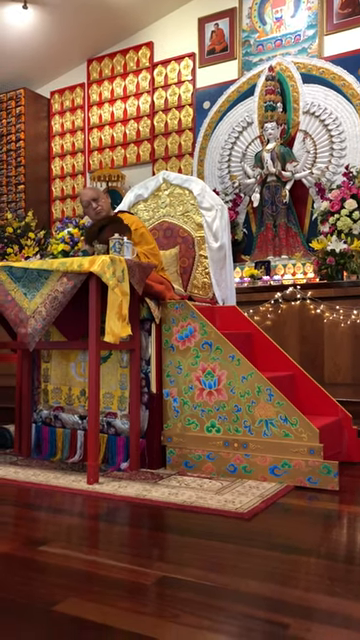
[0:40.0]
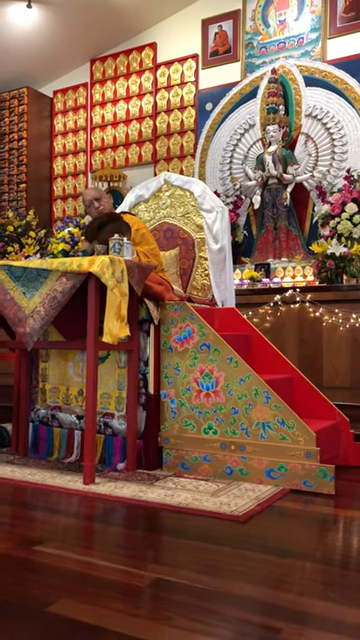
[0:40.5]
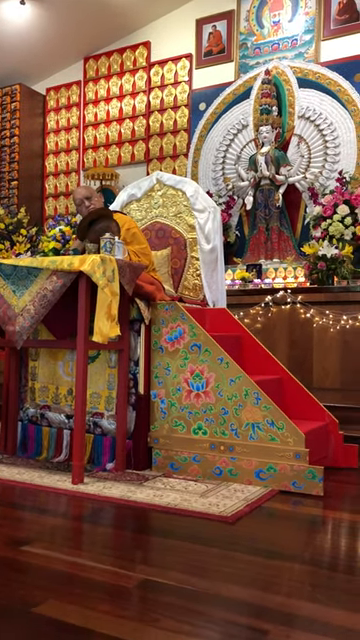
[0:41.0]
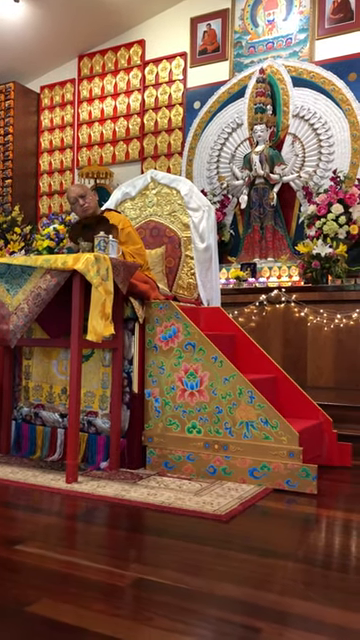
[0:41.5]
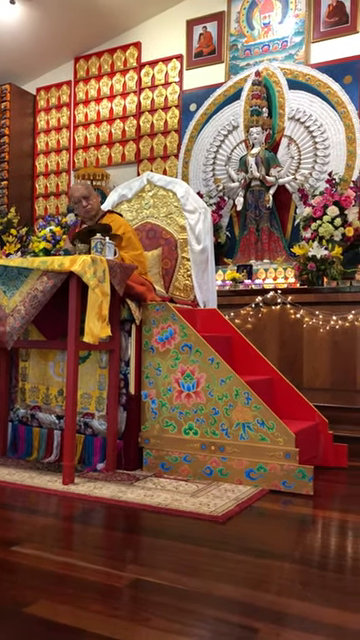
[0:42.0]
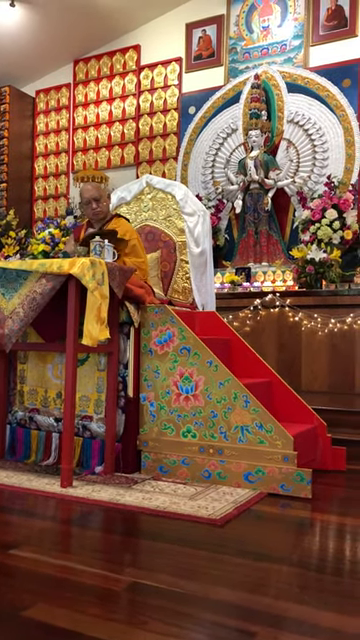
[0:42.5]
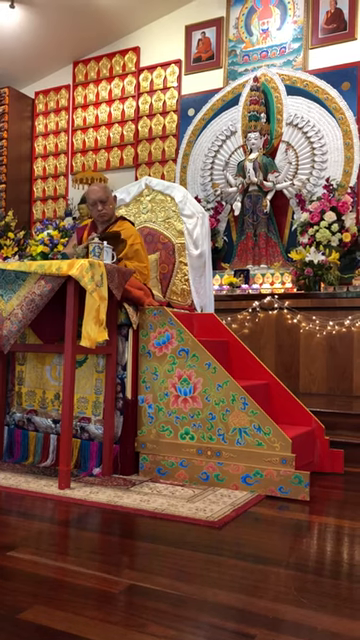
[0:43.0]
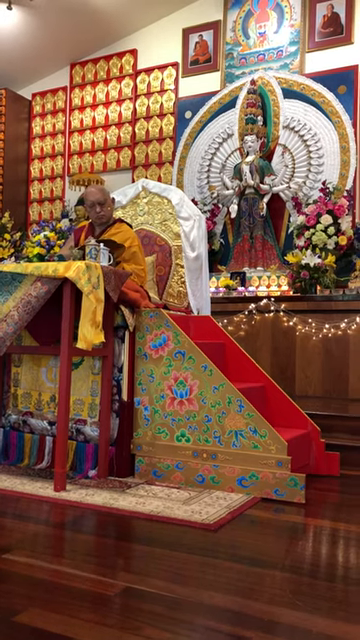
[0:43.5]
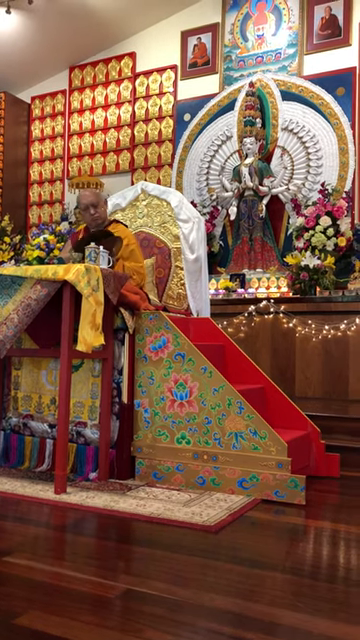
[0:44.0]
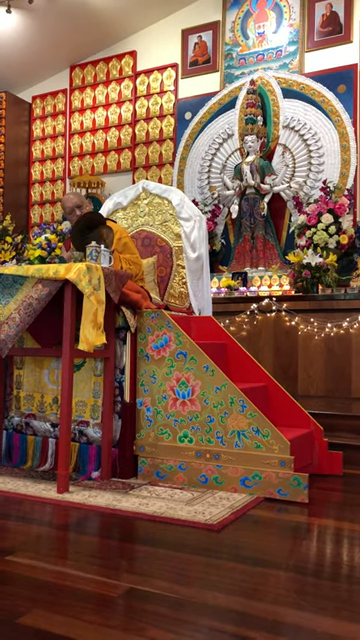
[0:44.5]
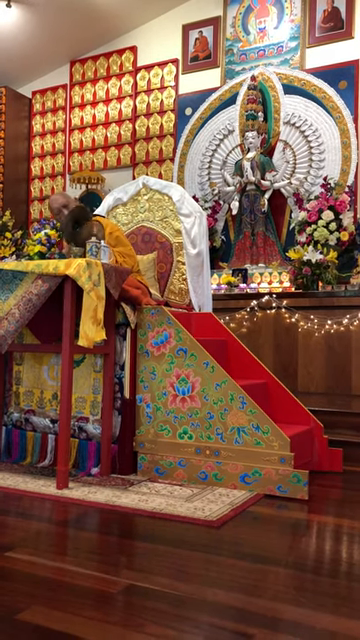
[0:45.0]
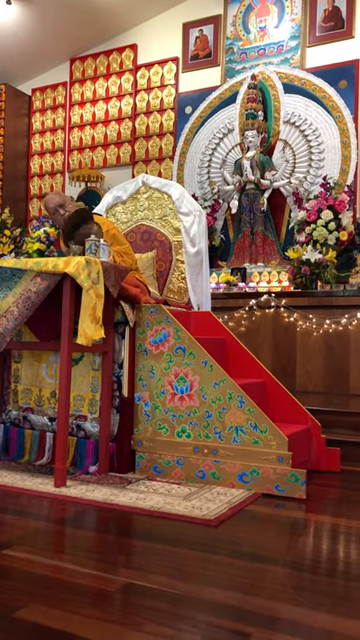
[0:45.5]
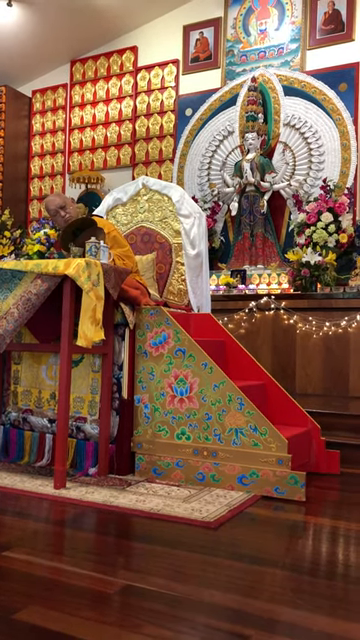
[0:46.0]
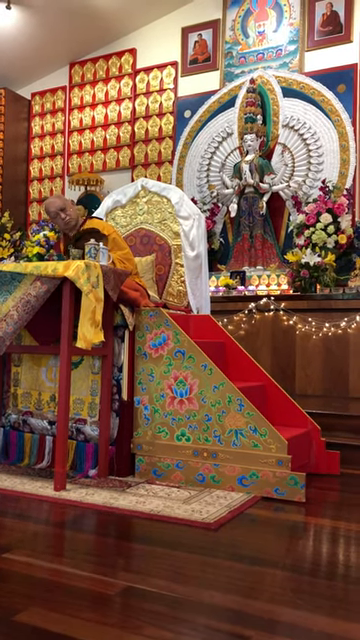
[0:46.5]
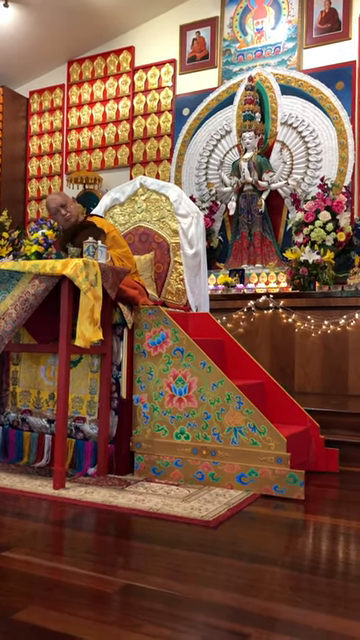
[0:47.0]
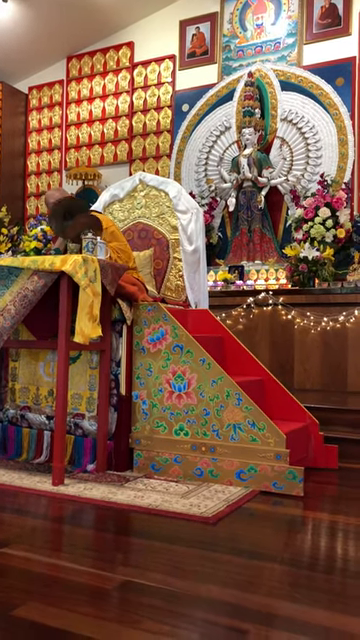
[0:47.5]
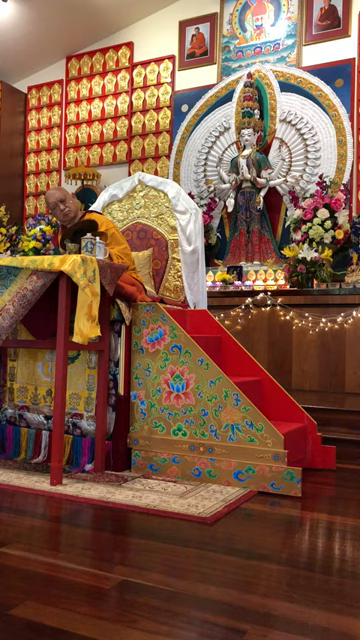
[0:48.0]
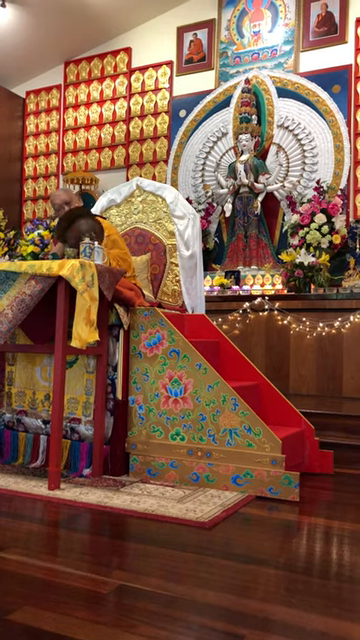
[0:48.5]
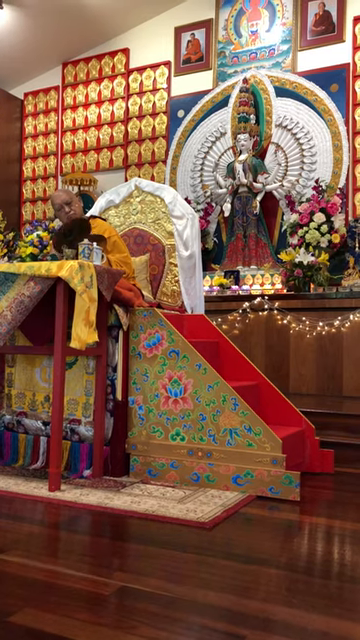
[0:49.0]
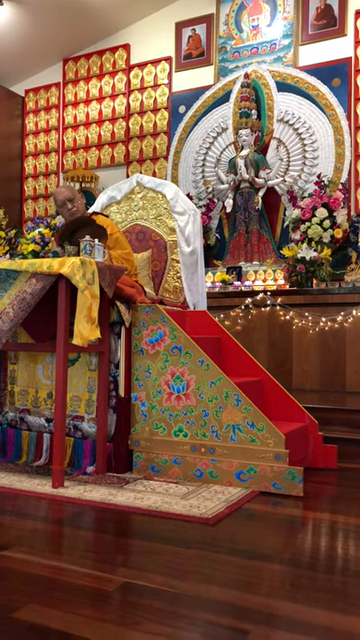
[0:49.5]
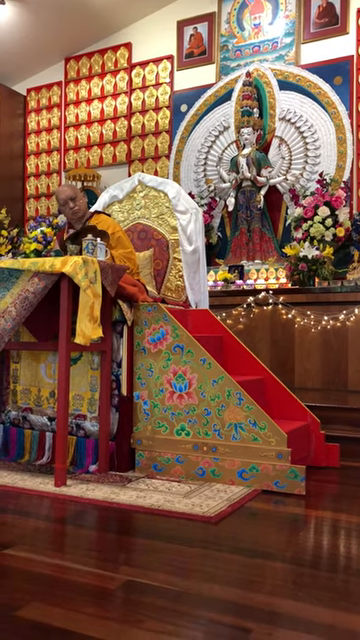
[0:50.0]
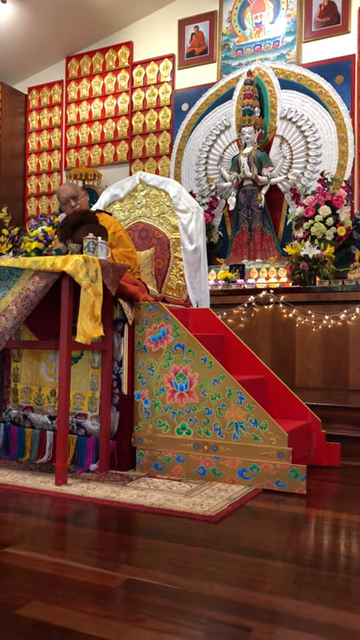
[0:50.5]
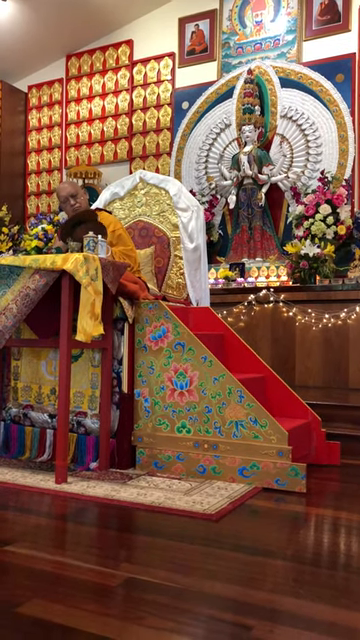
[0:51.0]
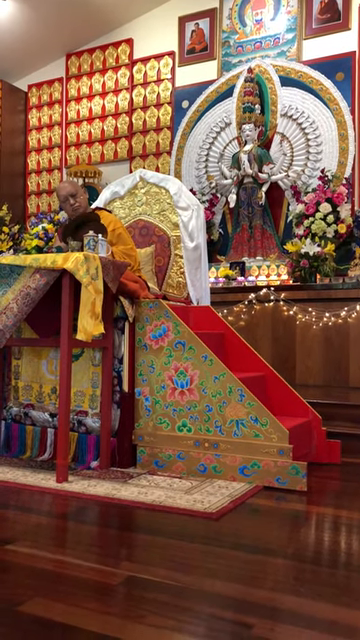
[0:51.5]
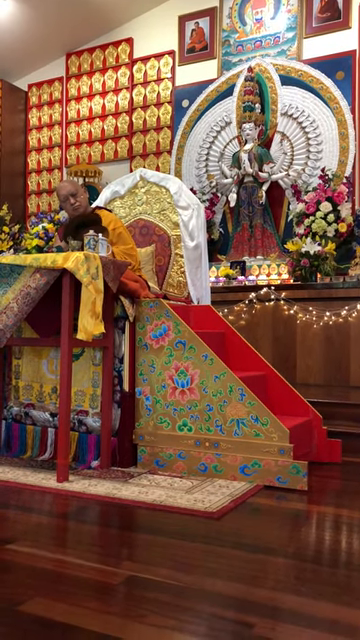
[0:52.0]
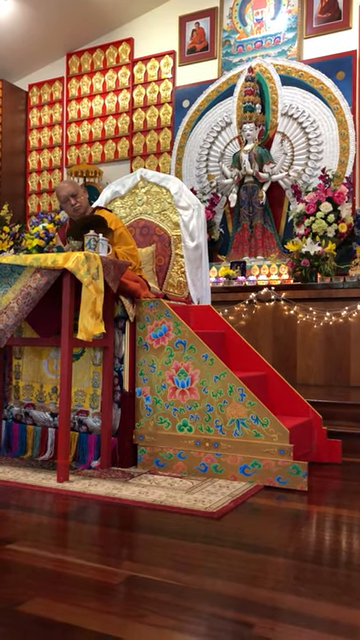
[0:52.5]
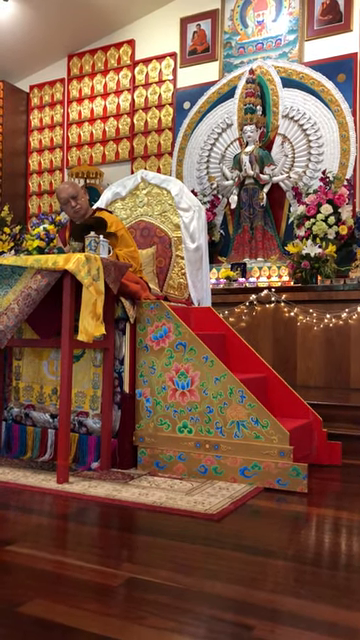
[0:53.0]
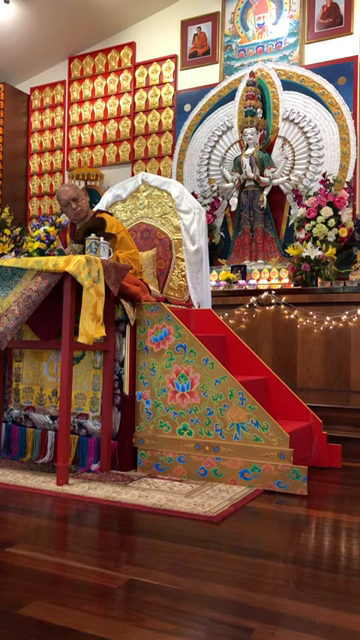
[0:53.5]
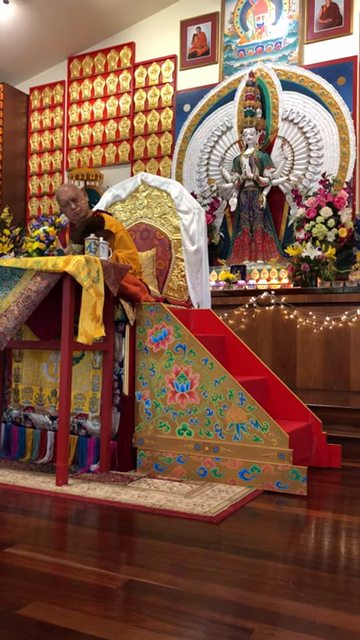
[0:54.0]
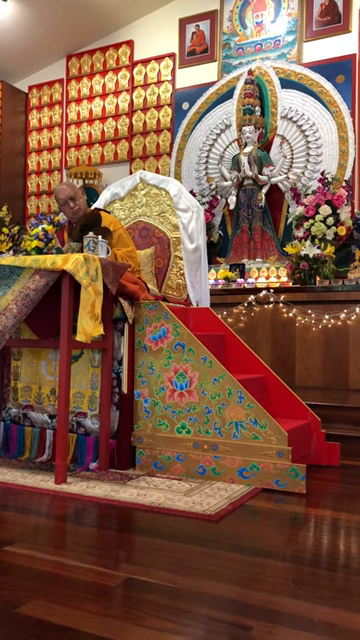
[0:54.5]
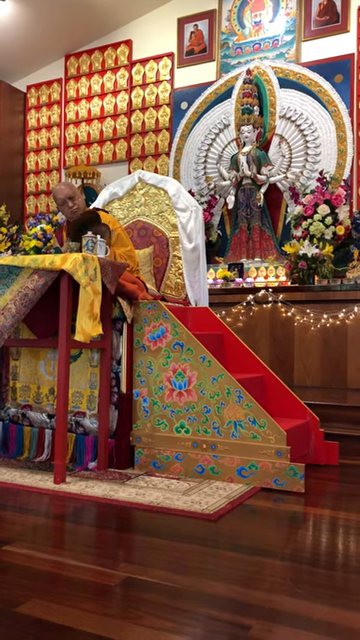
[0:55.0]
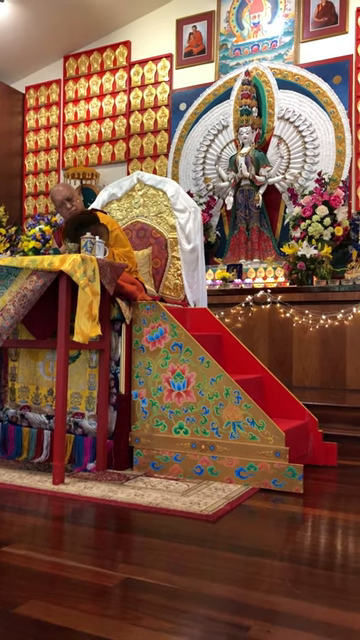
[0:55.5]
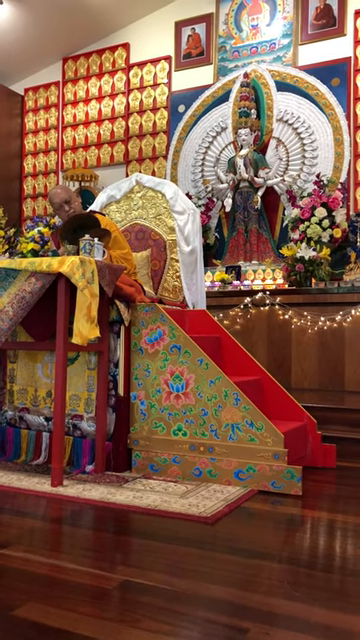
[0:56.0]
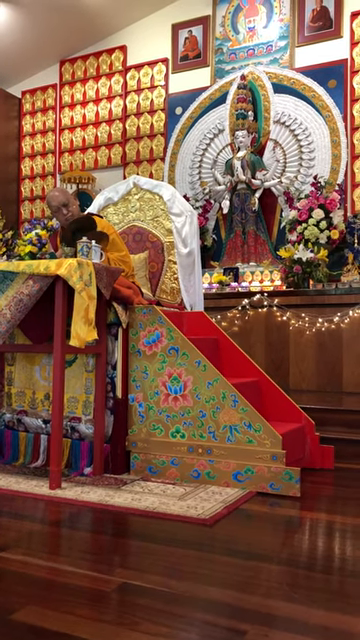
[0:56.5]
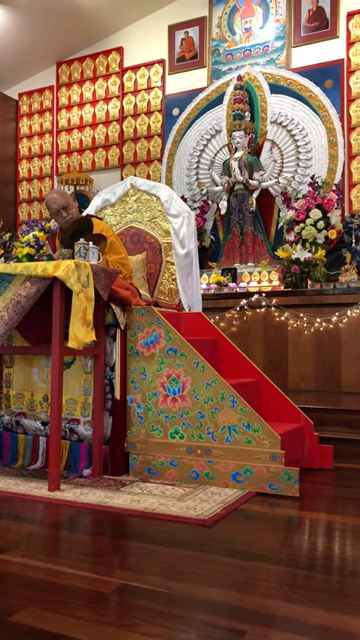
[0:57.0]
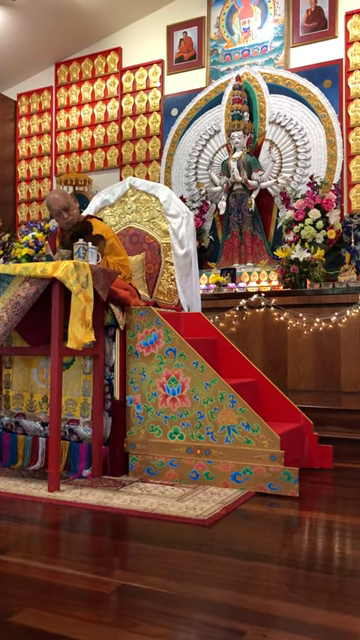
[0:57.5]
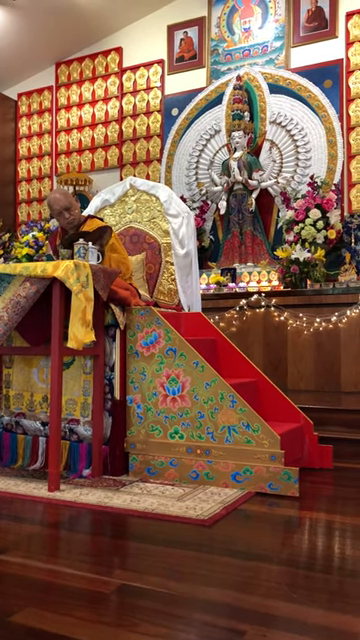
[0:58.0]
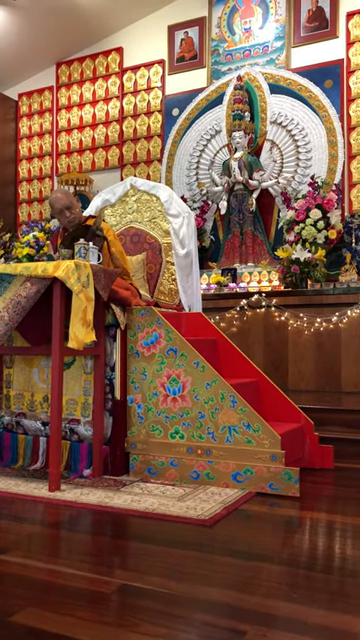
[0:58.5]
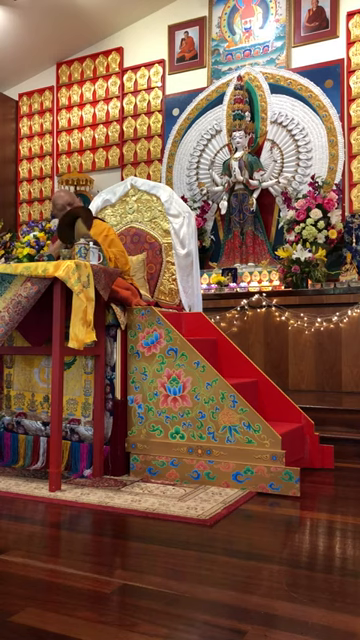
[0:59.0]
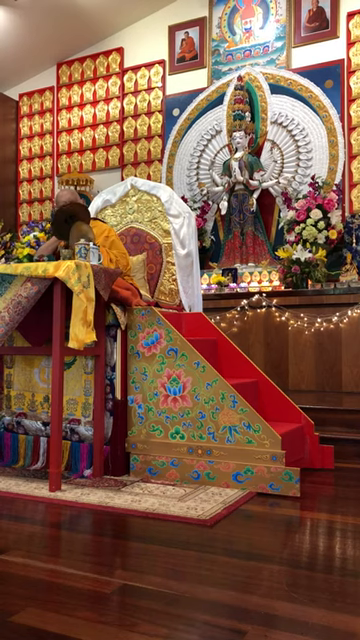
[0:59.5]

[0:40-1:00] In a Buddhist setting, the back wall is covered in different photographs of Buddhist monks, along with a collection of kind of red frames with golden emblems. The hall has parquet flooring. There is a very tall table with a big golden throne behind it, and a small set of three steps leading up to the throne. A Buddhist monk on the throne holds a pair of cymbals, looking at them intently as he shakes them together very gently and sways slightly, seemingly as part of some kind of ritual. The back wall also has different arrangements of flowers, some lit candles, and a kind of fairy-like garland attached to it. Underneath the tall table there appear to be lots of coloured items. There is a lot of red, gold and orange in the picture.